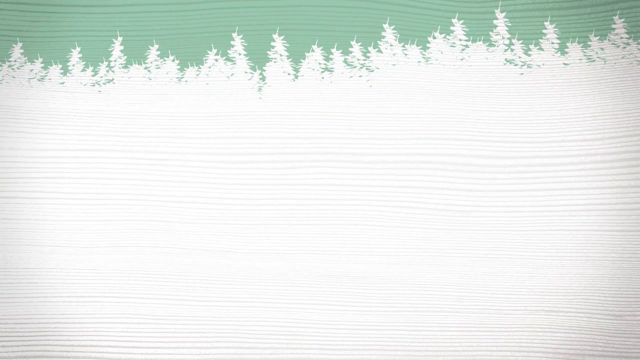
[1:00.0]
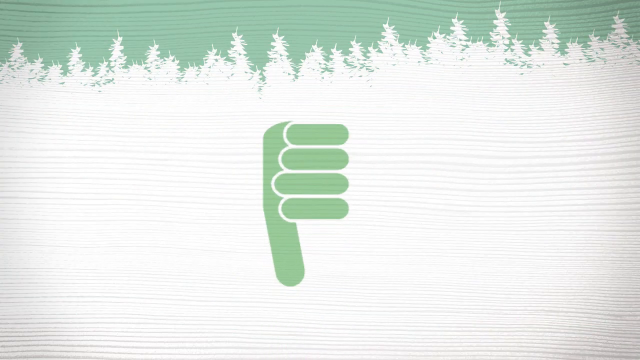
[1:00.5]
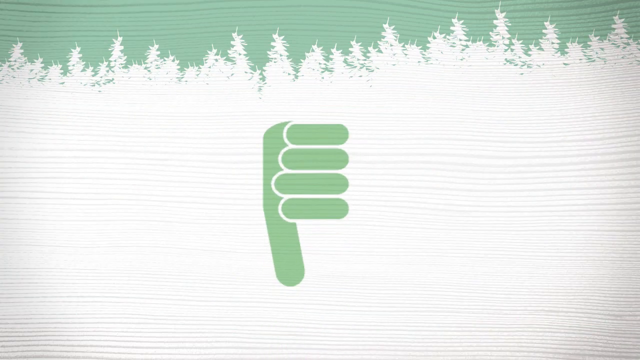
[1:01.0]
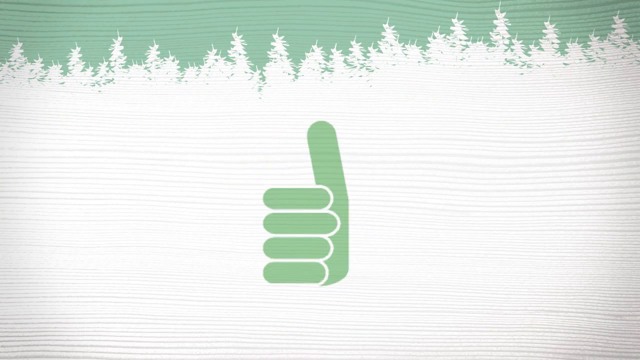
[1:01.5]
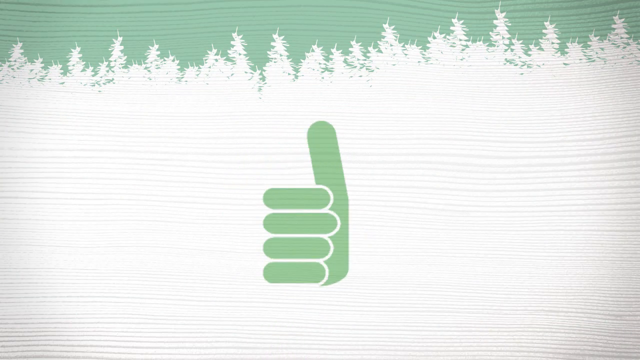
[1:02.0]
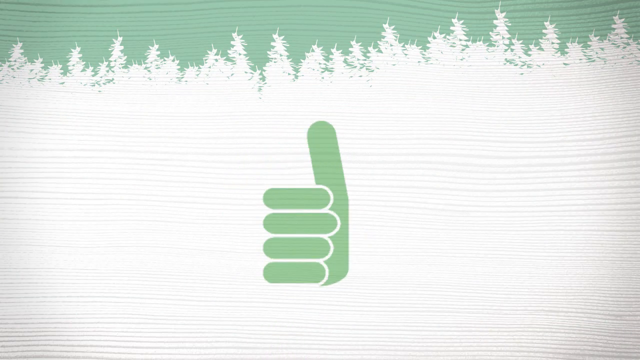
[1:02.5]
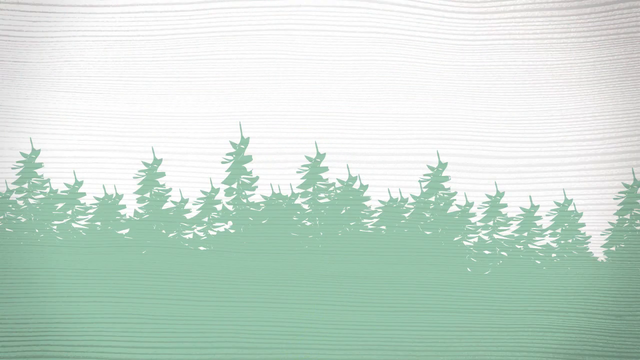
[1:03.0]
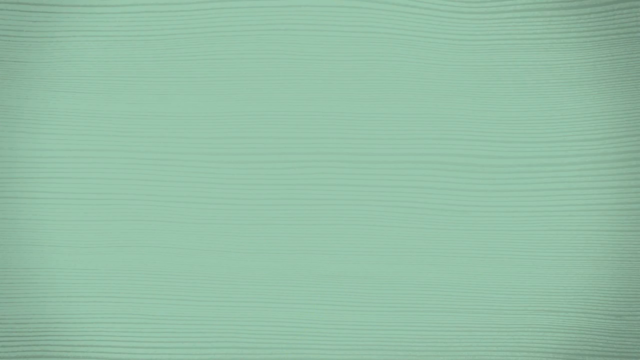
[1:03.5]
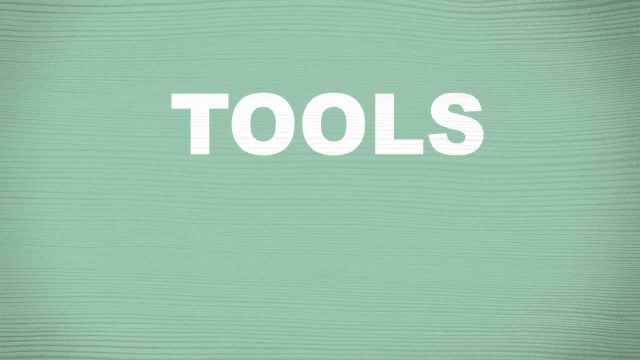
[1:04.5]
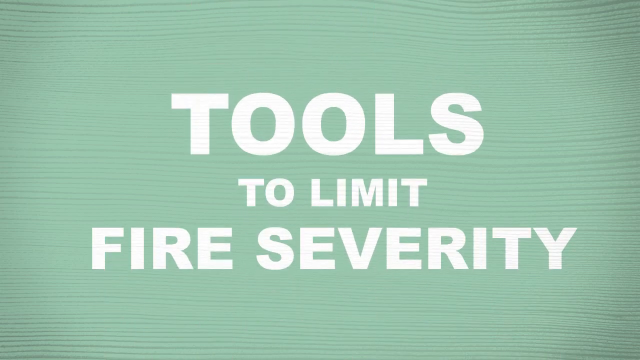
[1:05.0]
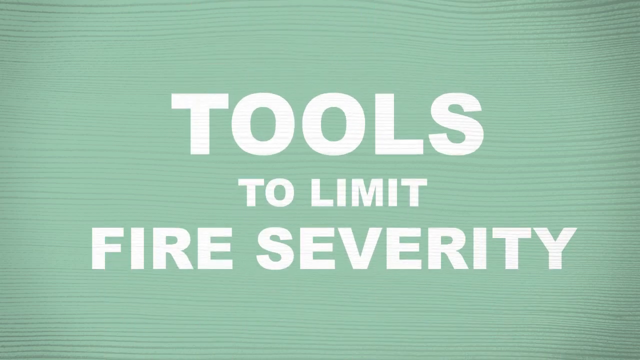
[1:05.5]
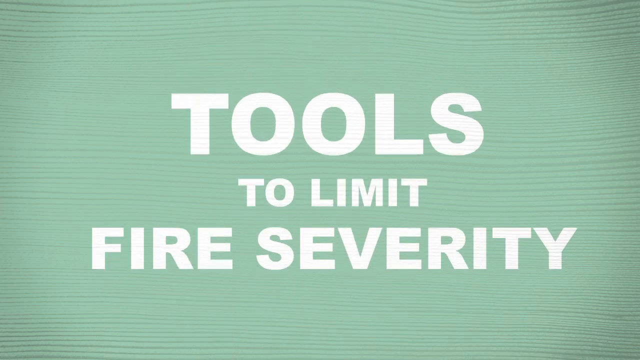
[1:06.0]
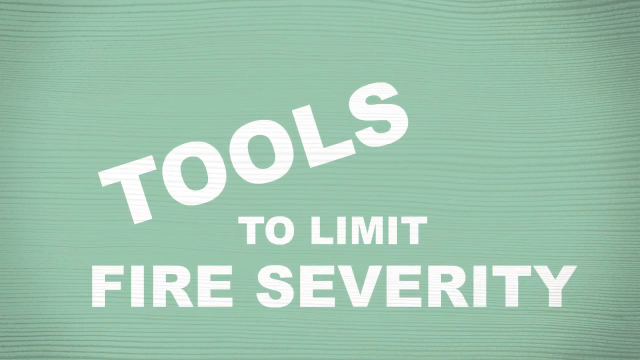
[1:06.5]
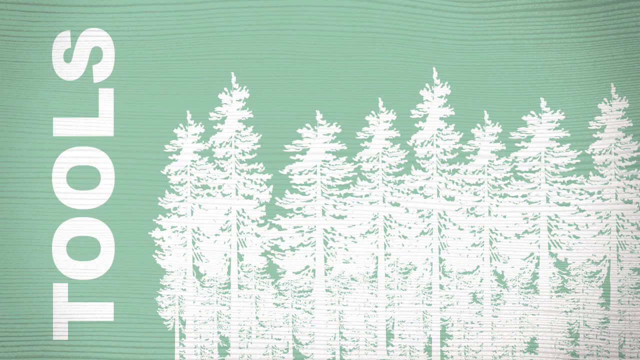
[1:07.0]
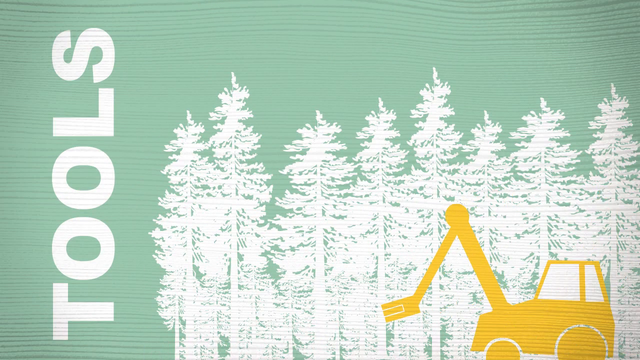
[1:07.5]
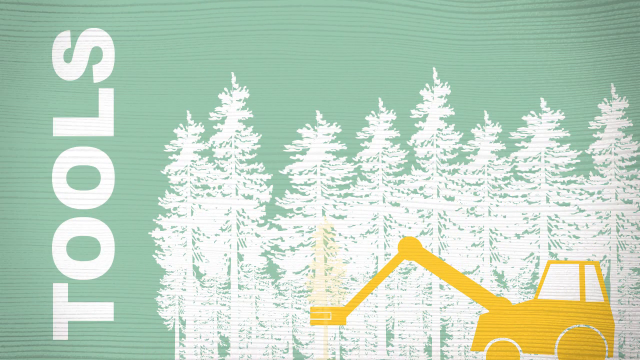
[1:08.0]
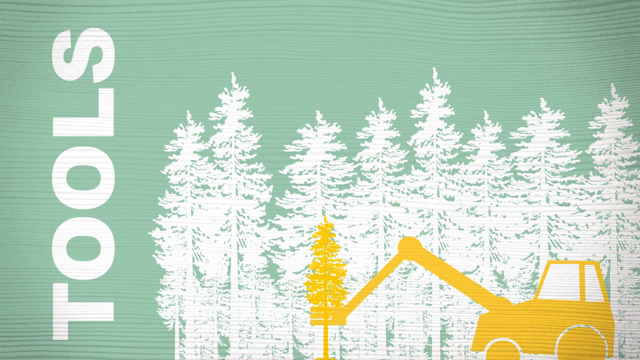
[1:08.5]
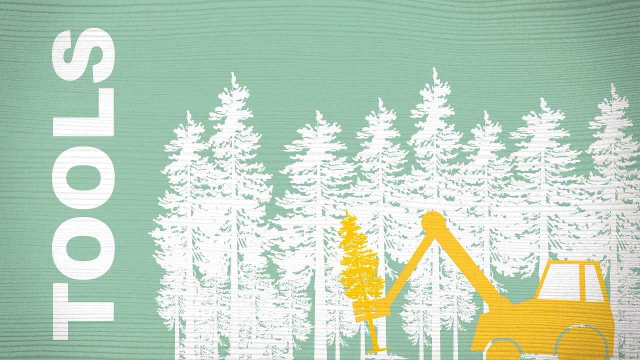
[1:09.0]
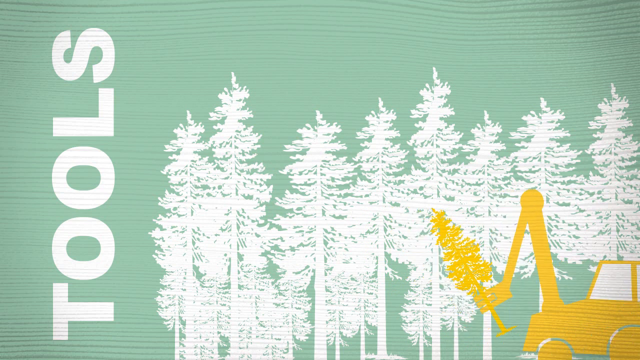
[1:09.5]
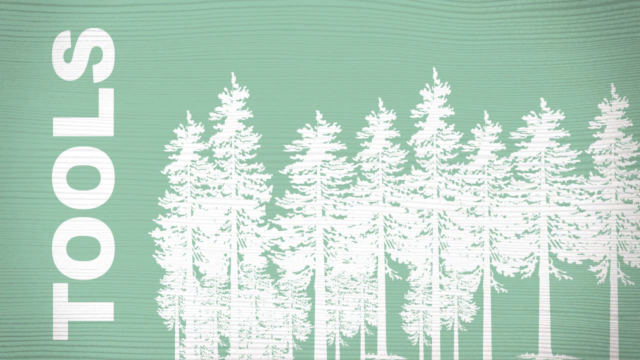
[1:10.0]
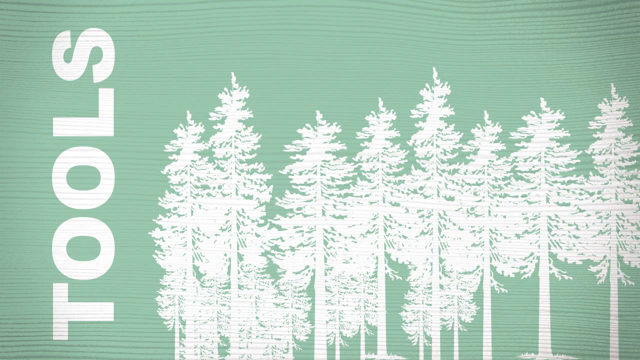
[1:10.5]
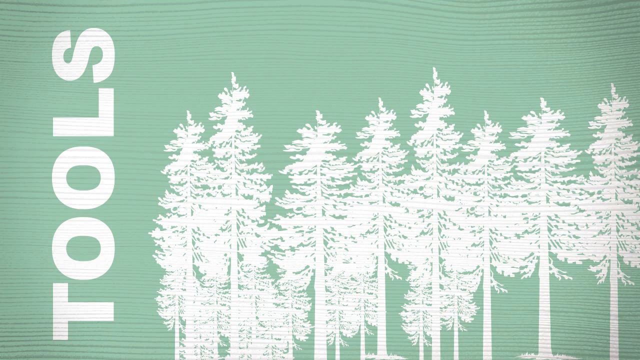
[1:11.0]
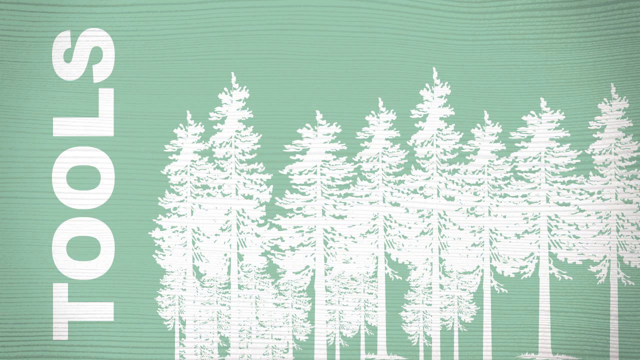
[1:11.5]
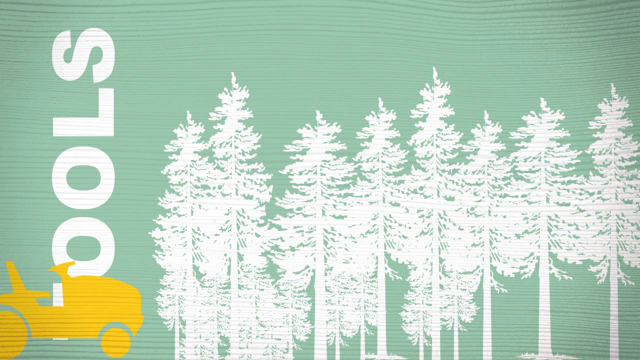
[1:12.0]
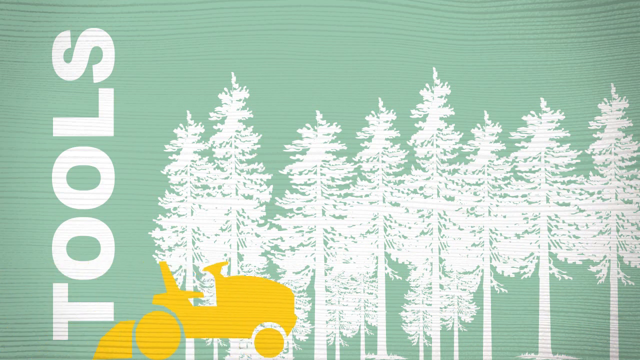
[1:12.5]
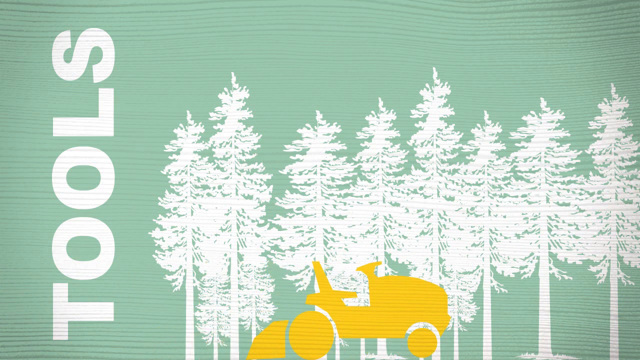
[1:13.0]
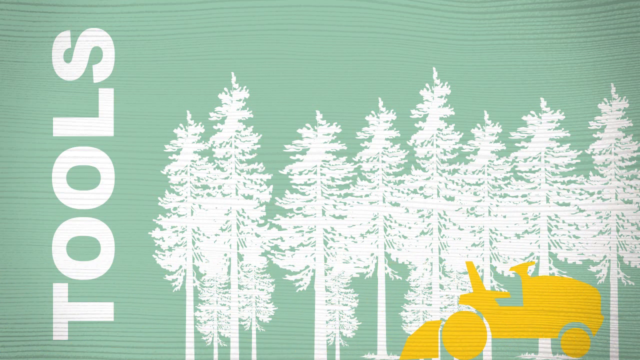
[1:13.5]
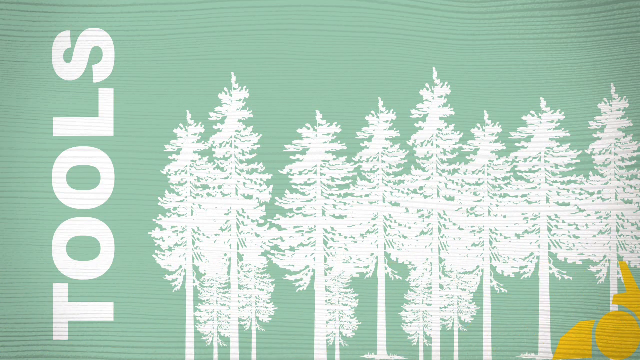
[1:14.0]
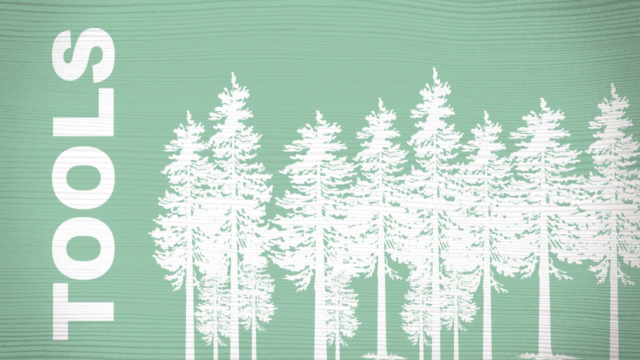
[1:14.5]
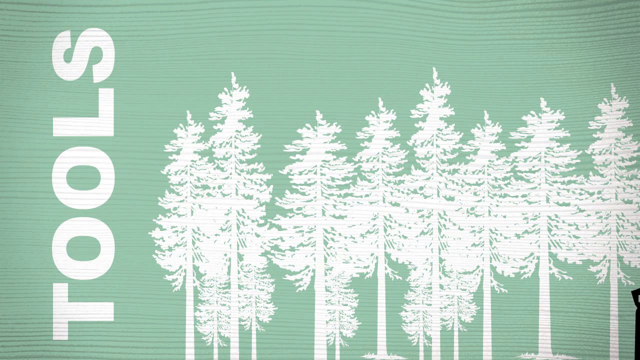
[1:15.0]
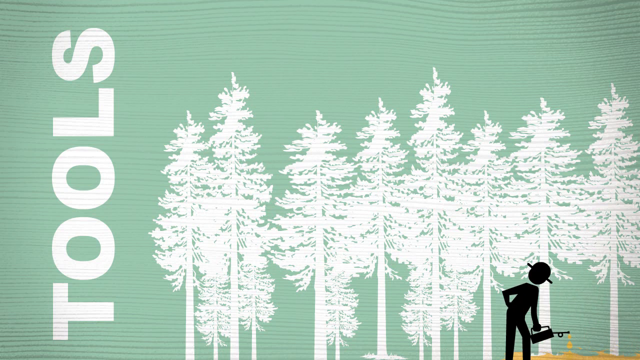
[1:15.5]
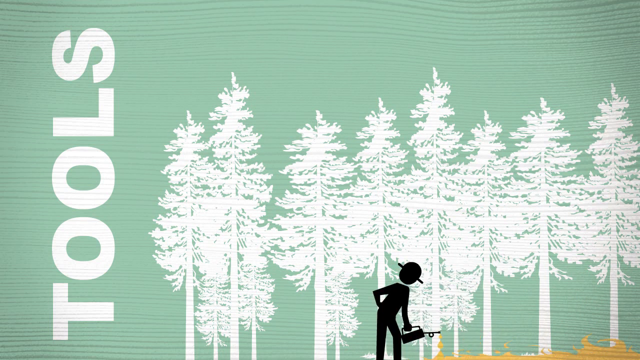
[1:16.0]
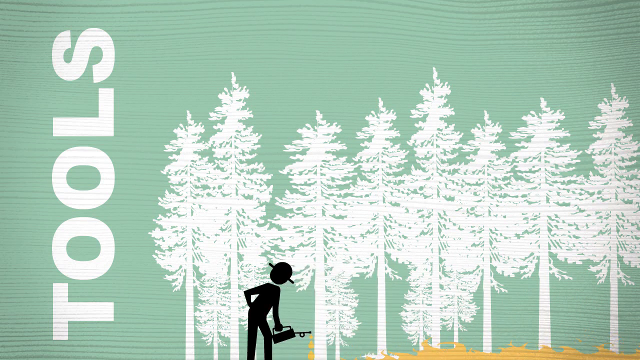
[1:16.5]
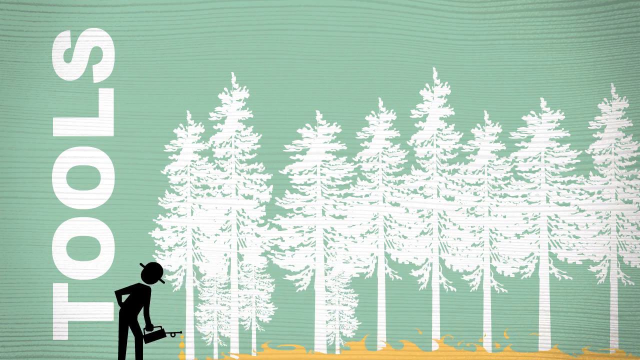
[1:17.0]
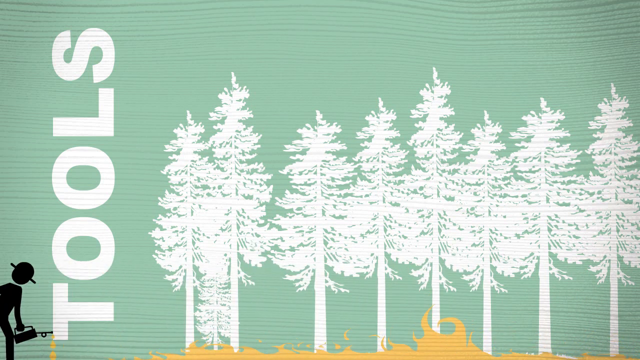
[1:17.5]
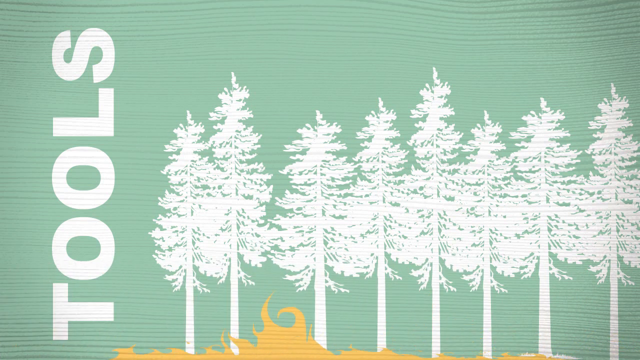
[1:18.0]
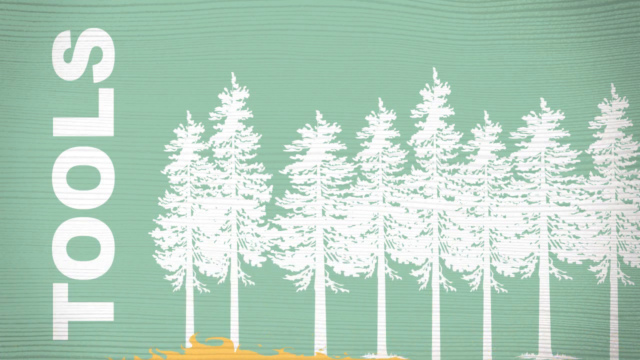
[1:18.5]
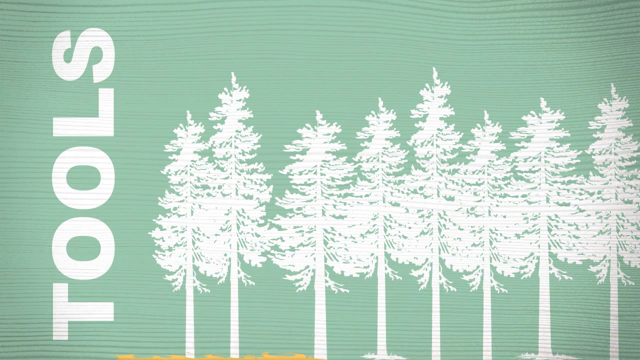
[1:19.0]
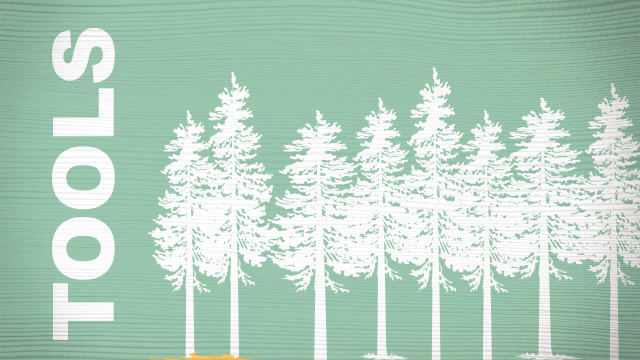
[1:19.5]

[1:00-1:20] The teal background with white trees continues. A thumbs-down emoticon turns into a thumbs up. The teal background then takes over the whole screen, and the words "tools to limit fire severity" appear. A crane comes in among some trees, and the smaller tree is removed. A lawnmower goes past the screen, removing the smaller trees, and a man with something in his hand also brushes across the screen. Fire rages at the bottom. Several little vehicles and emoticons move across the screen, and each time one passes, the little trees are removed; the smaller, shorter trees are removed while the bigger trees remain.